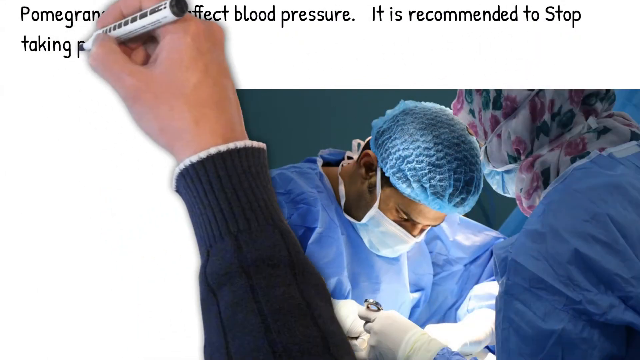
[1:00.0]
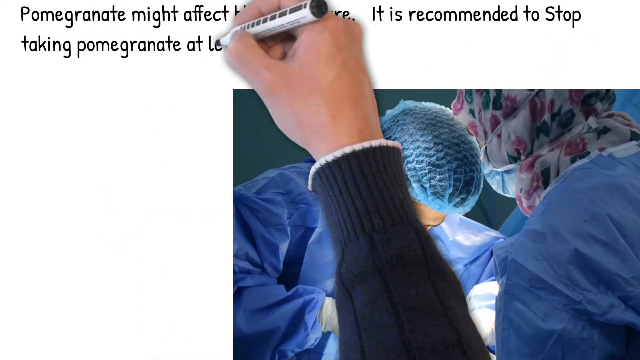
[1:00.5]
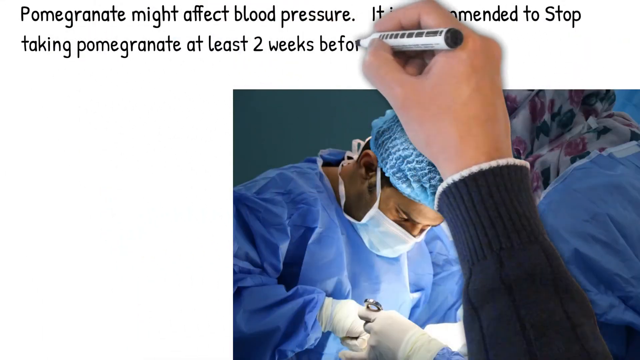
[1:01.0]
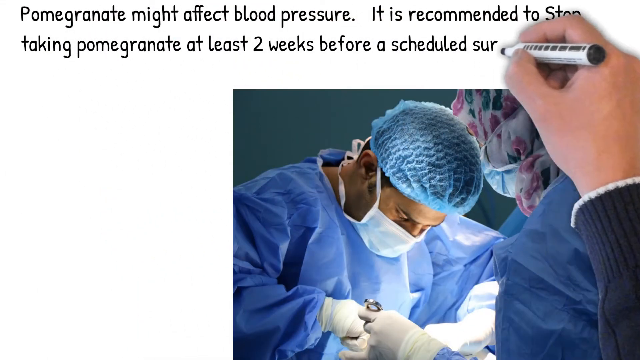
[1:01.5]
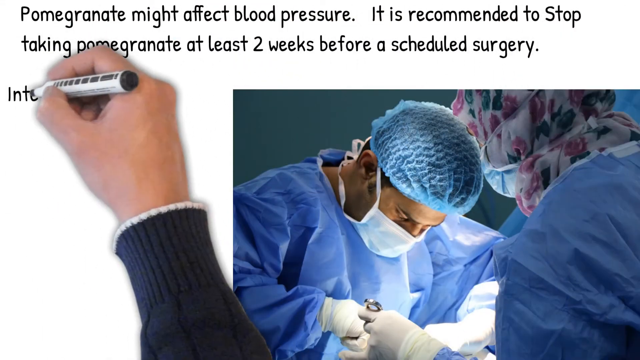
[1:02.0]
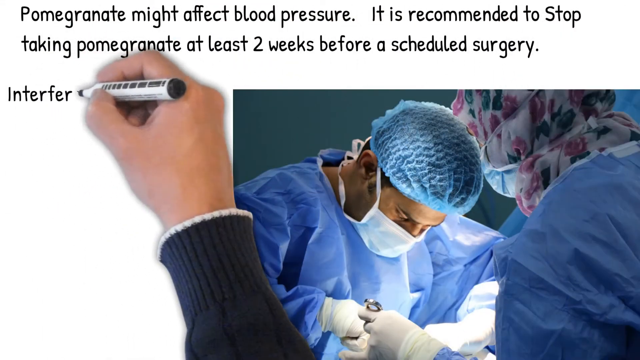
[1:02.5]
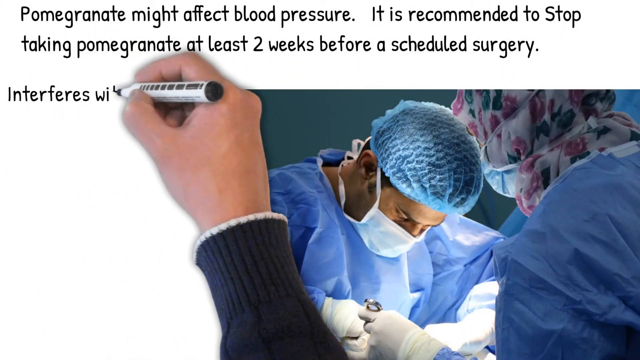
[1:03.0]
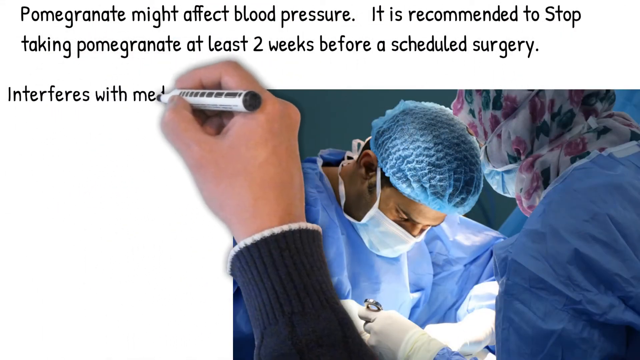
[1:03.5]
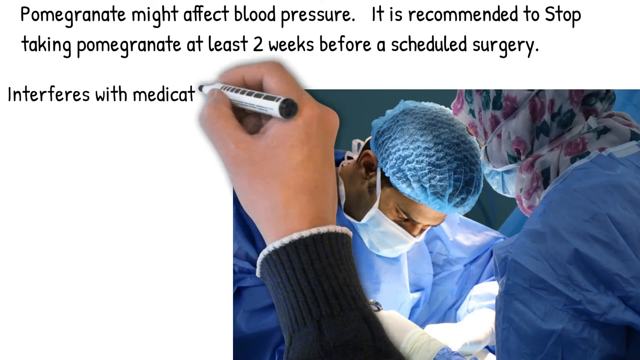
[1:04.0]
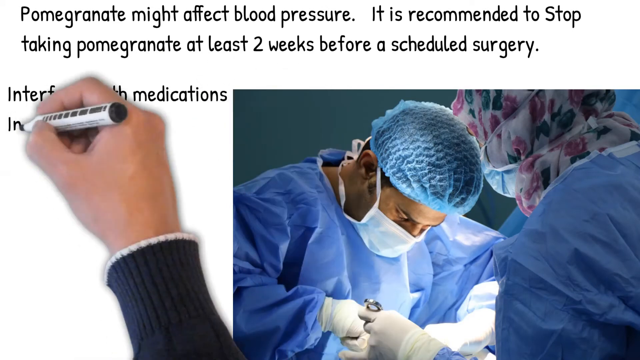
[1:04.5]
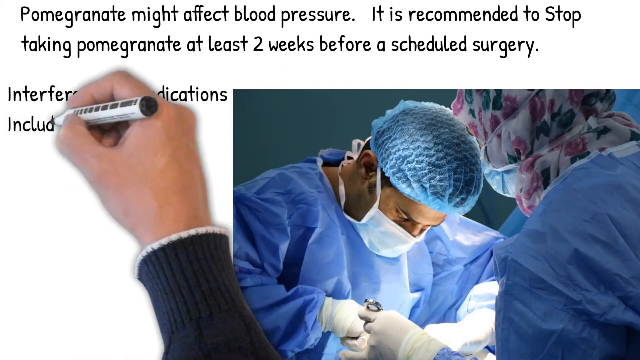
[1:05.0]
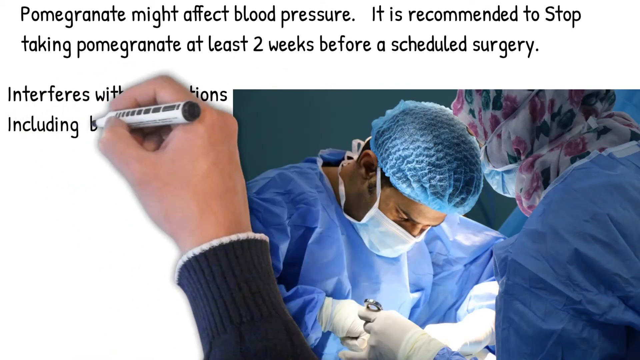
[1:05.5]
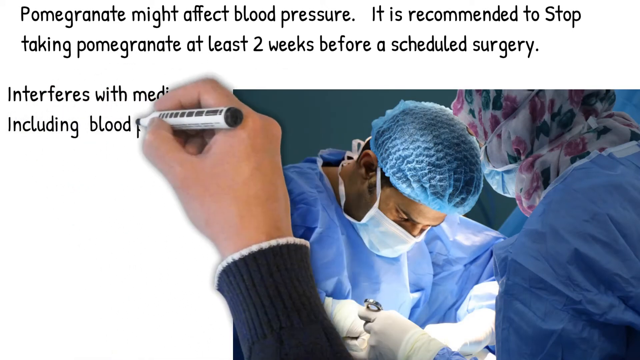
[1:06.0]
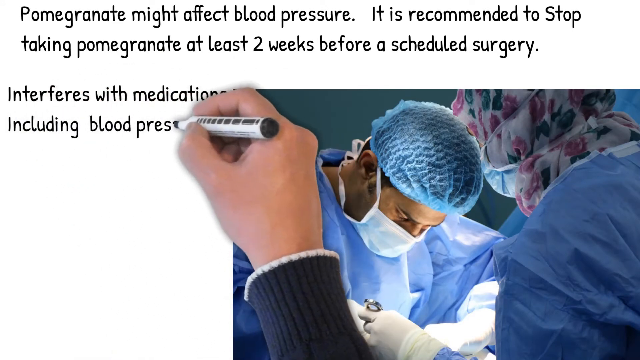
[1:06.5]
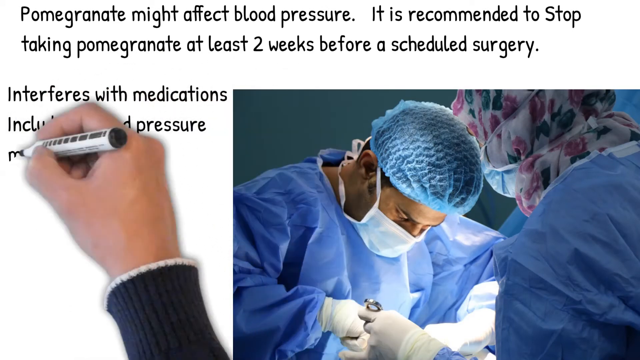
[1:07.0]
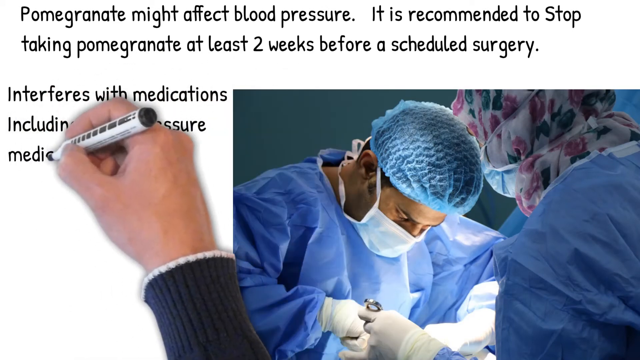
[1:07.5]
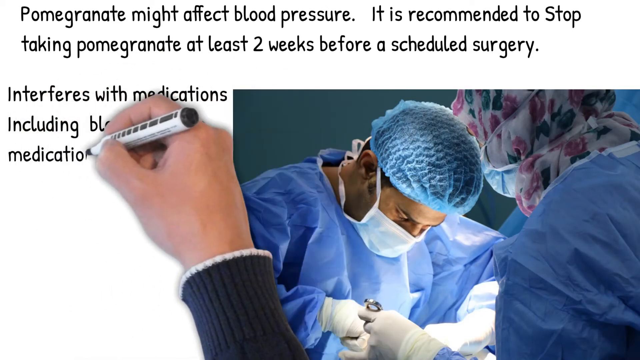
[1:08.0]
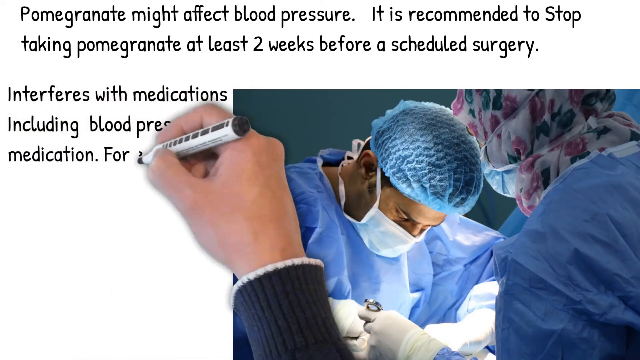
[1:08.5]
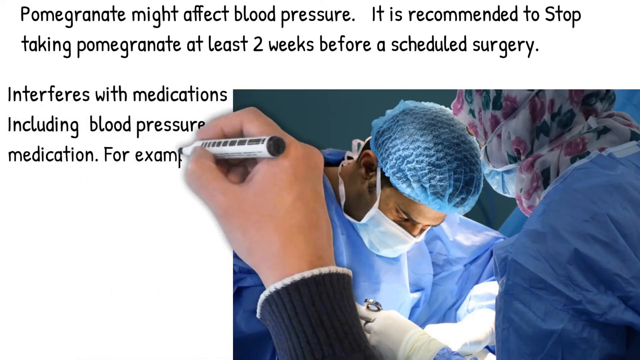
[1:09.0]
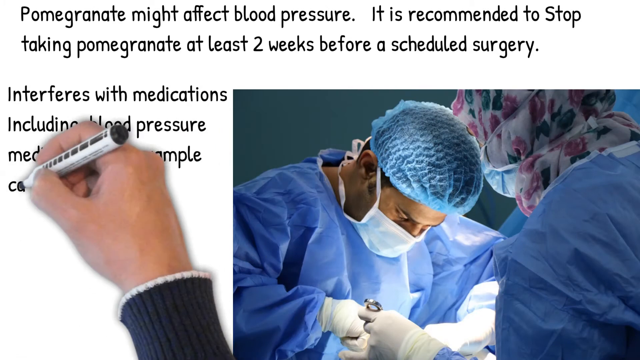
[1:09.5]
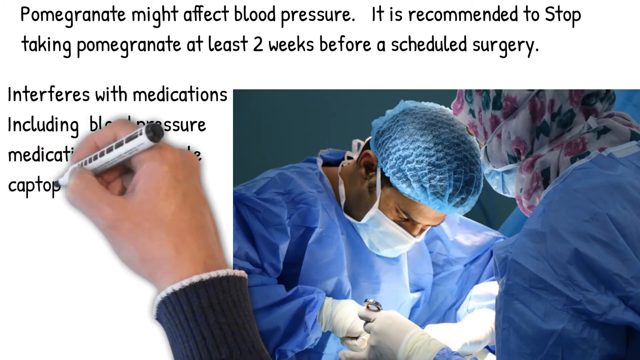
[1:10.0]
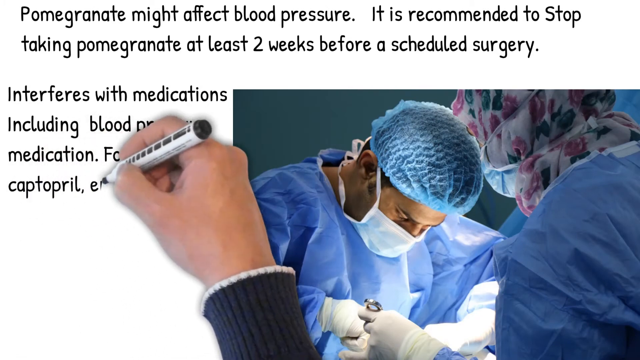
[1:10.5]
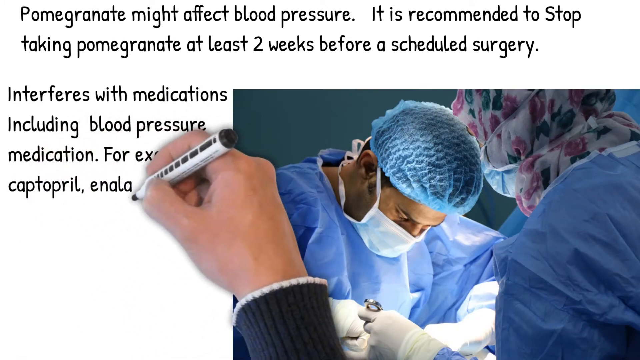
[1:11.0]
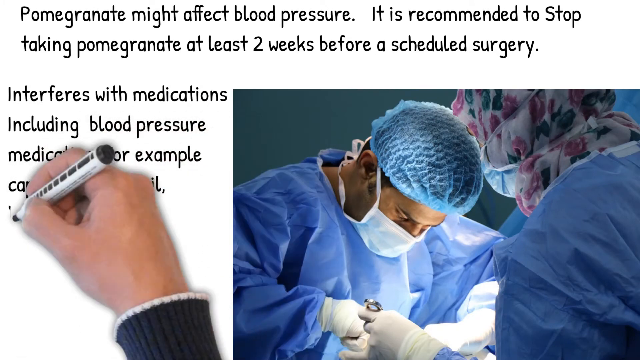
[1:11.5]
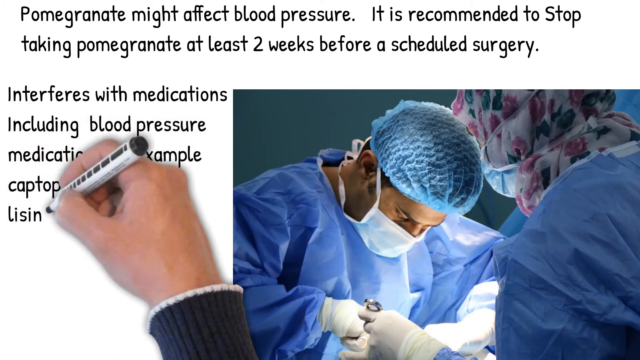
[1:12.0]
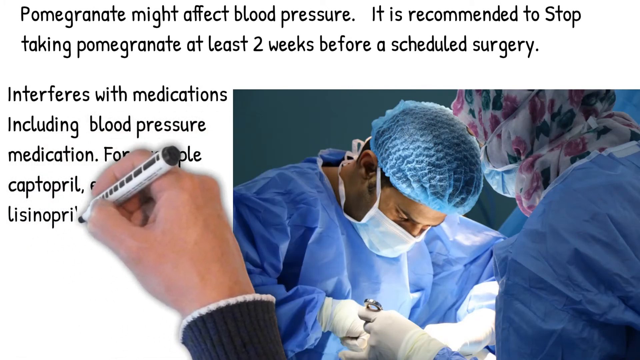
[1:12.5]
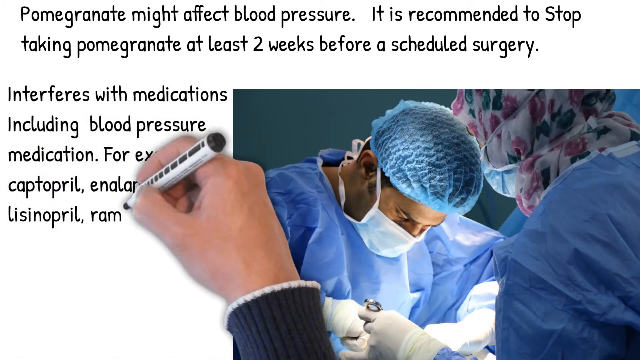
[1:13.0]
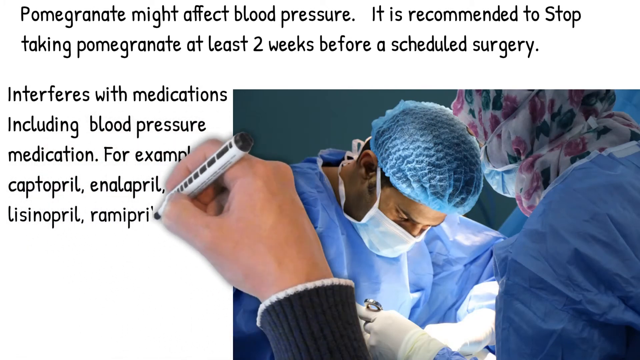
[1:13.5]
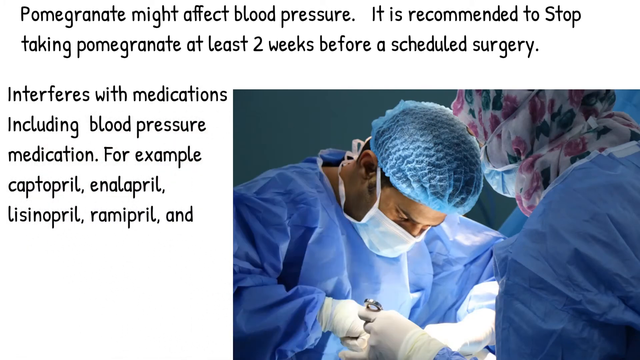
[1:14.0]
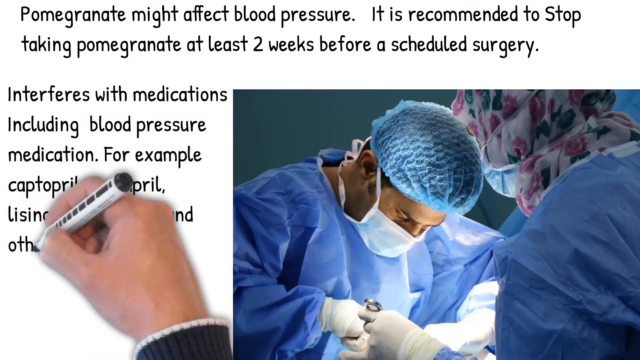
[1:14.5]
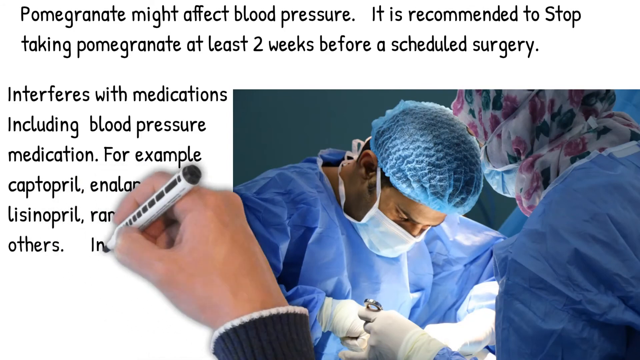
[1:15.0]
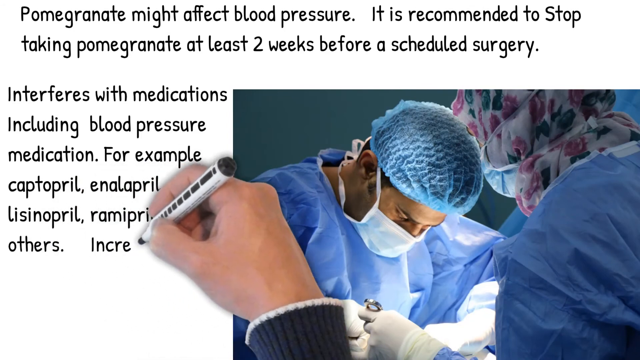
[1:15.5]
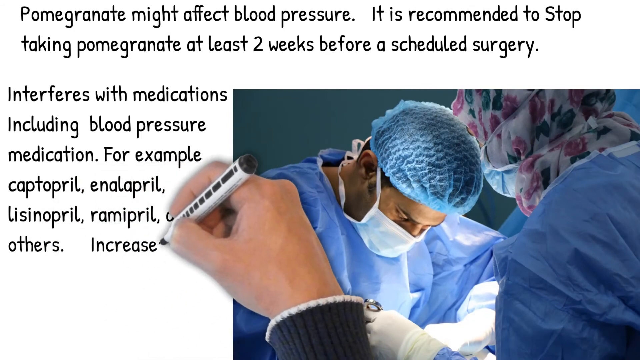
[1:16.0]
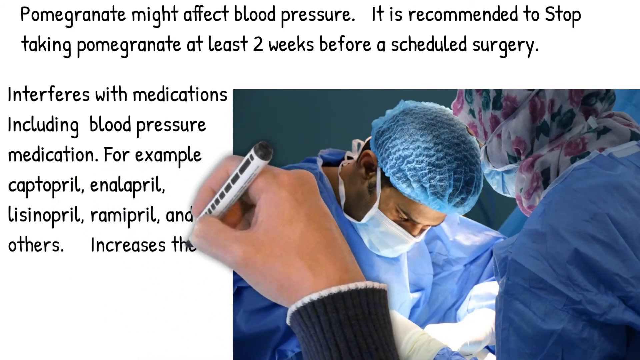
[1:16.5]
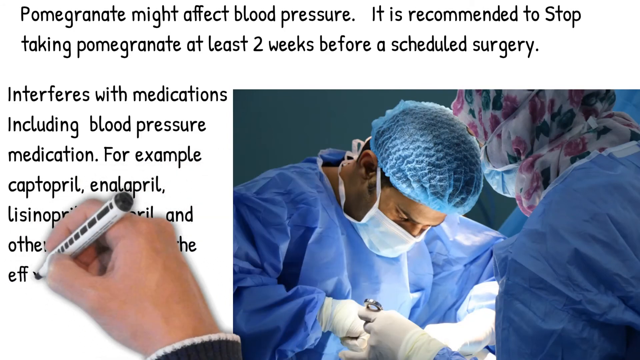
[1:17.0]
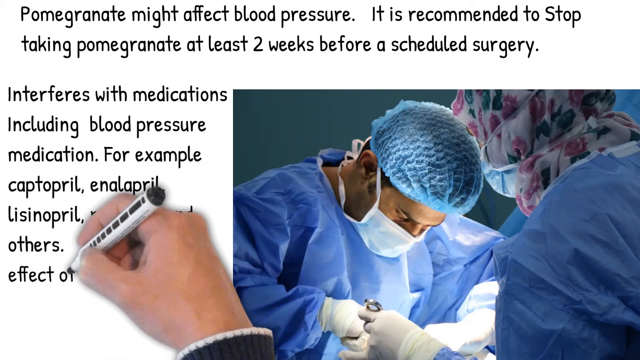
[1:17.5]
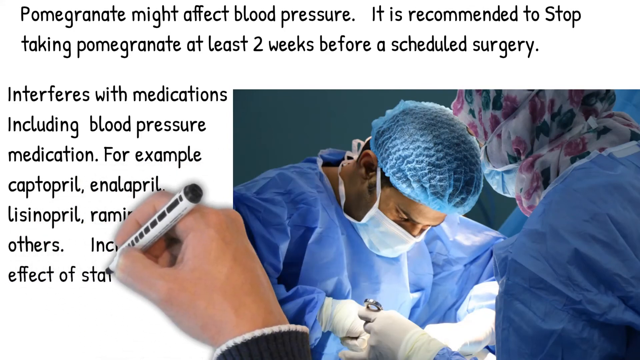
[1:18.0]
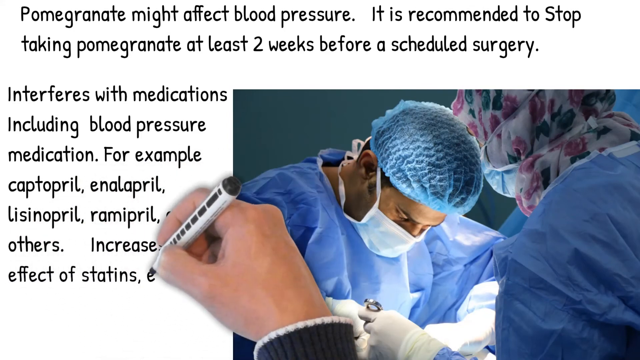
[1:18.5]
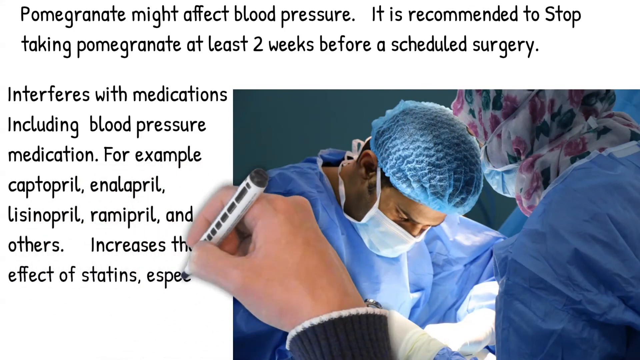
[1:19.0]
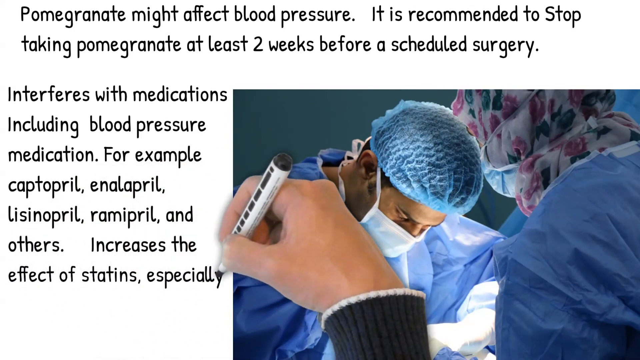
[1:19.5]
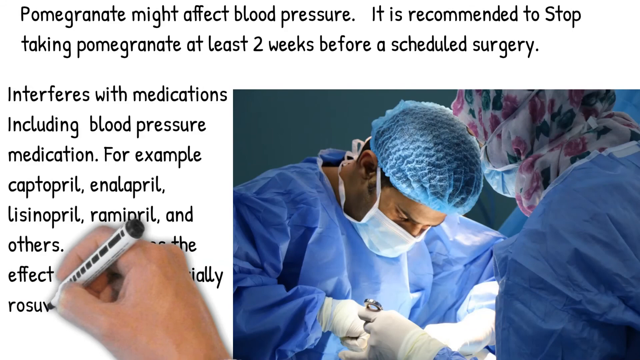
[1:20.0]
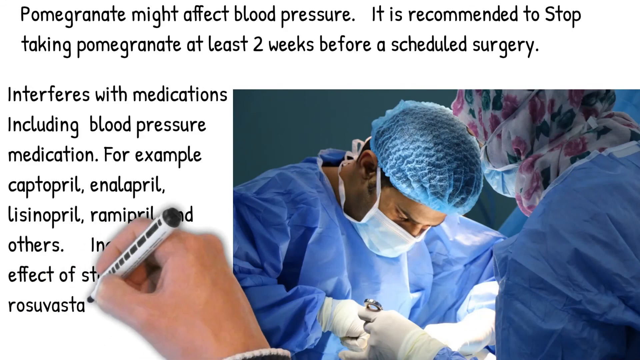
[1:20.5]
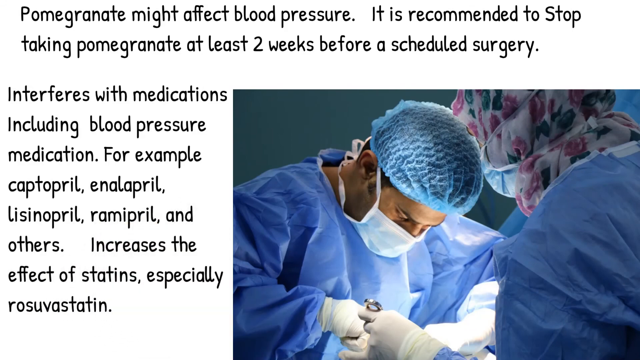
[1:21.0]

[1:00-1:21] The screen has a white background with black text, except for the lower right quadrant, which holds a photograph of two doctors wearing blue scrubs and masks who look to be performing a surgery, with the patient cropped out. The hand holding a pen writes the text "pomegranate might affect blood pressure. It is recommended to stop taking pomegranate at least two weeks before a scheduled surgery. It interferes with medications including blood pressure medication for example captopril, enalapril, lisinopril, ramipril, and others. Increases the effect of statins especially" followed by a last word that is hard to read, possibly spelled r-u-s-r-e-s-u-v-a-s-t-a-t-i-n. Toward the bottom of the screen, a black bar stretches from the left side to the right side and fades in a gradient from black toward white, while most of the screen remains white.